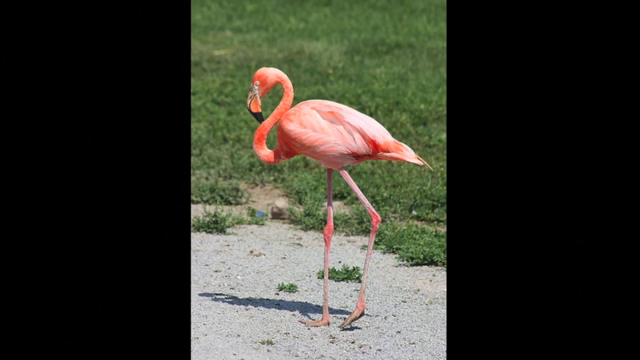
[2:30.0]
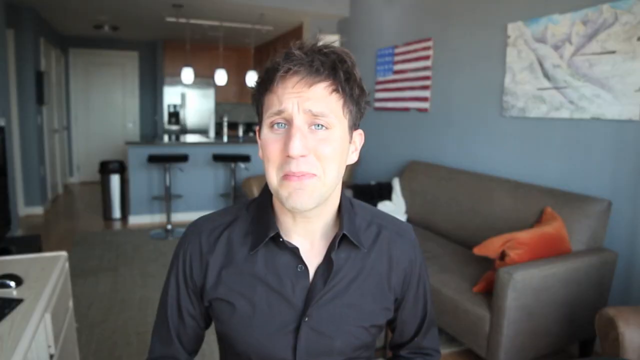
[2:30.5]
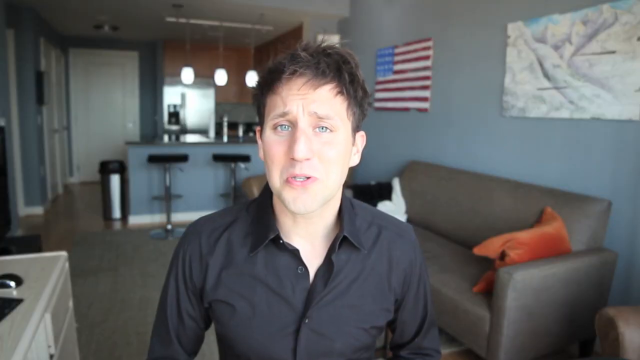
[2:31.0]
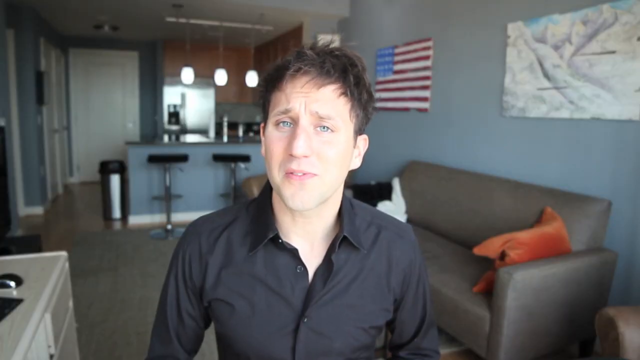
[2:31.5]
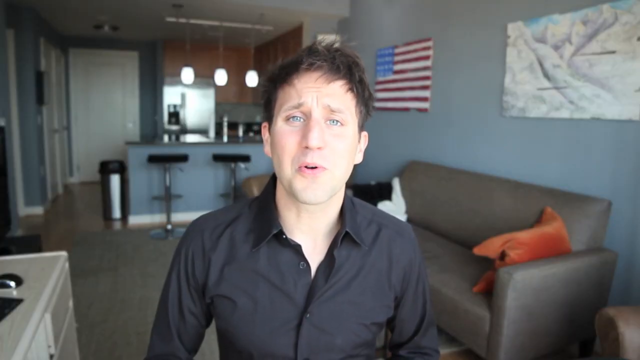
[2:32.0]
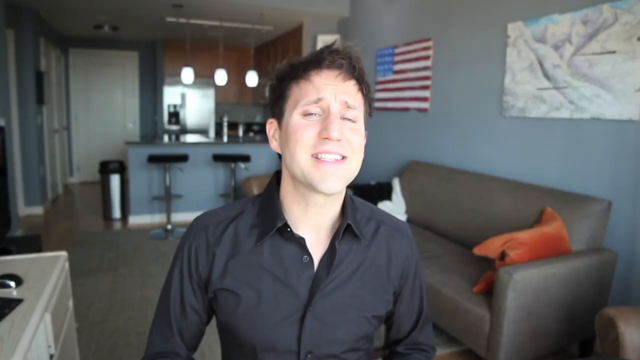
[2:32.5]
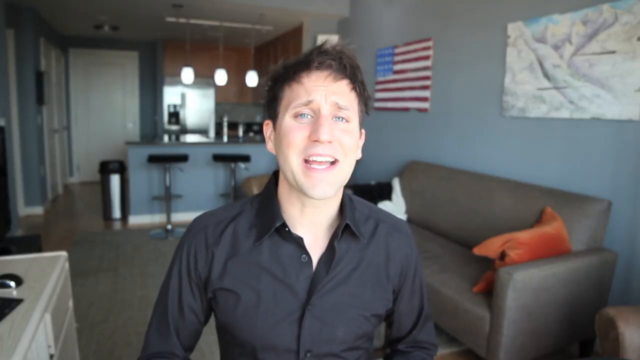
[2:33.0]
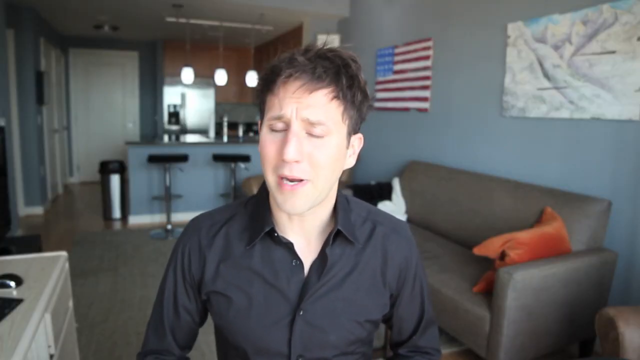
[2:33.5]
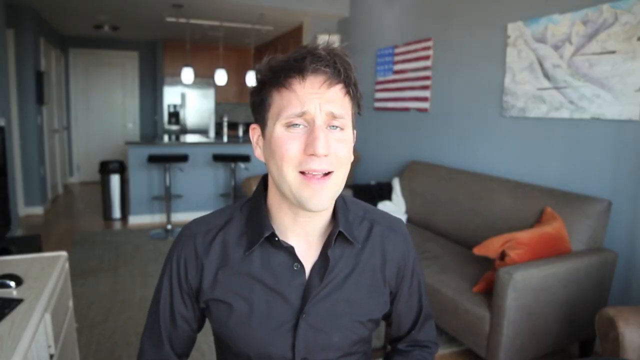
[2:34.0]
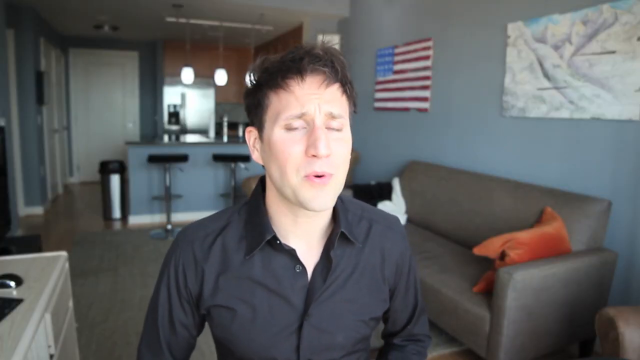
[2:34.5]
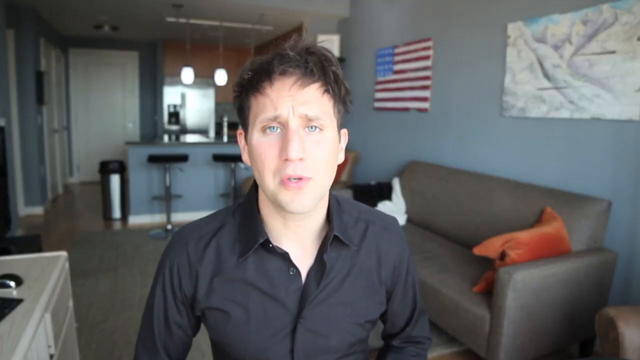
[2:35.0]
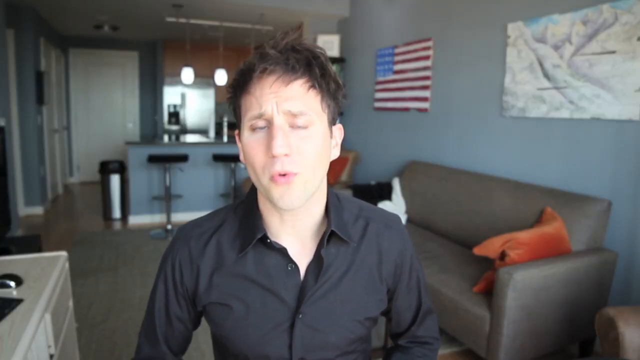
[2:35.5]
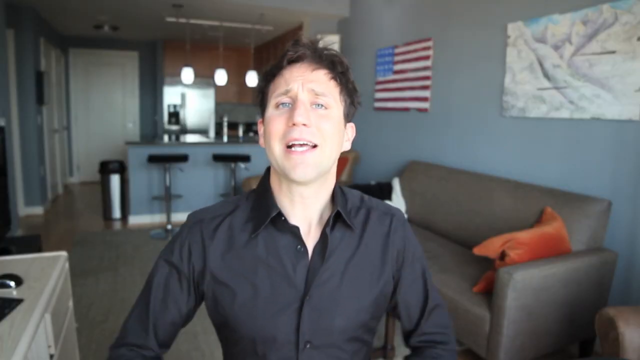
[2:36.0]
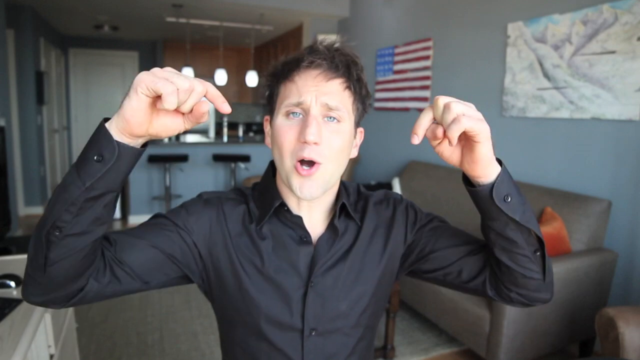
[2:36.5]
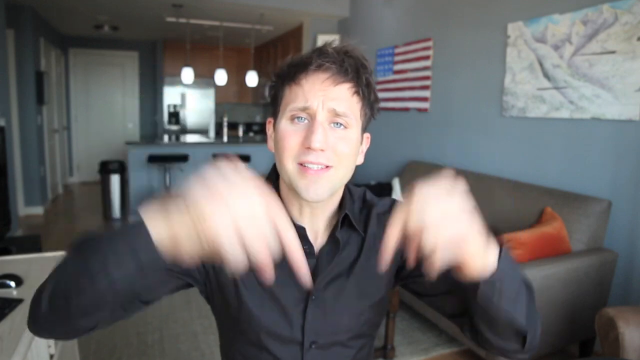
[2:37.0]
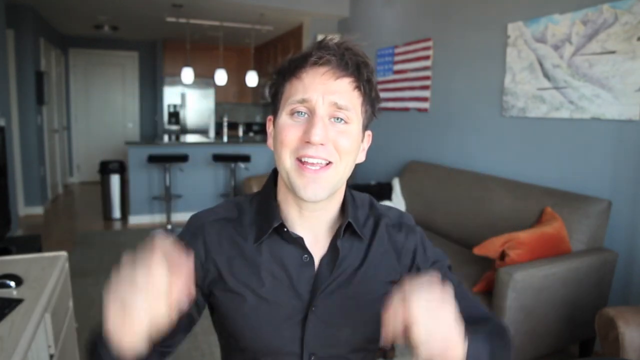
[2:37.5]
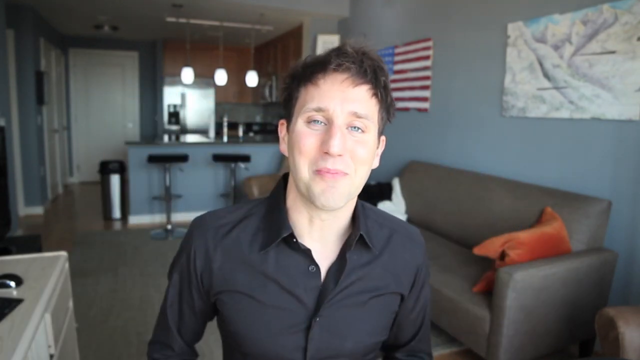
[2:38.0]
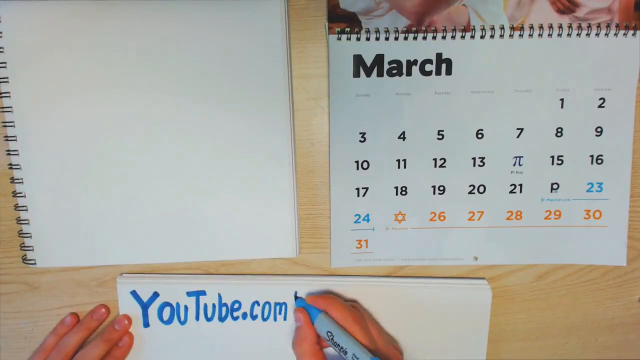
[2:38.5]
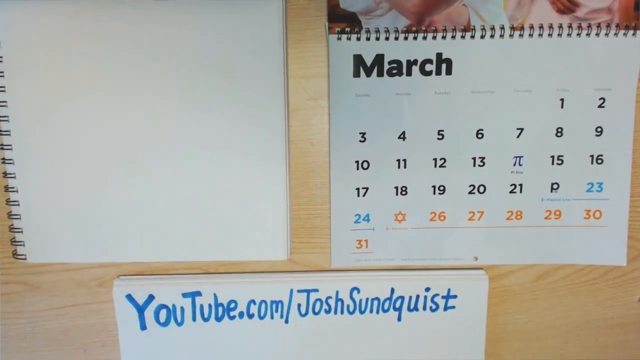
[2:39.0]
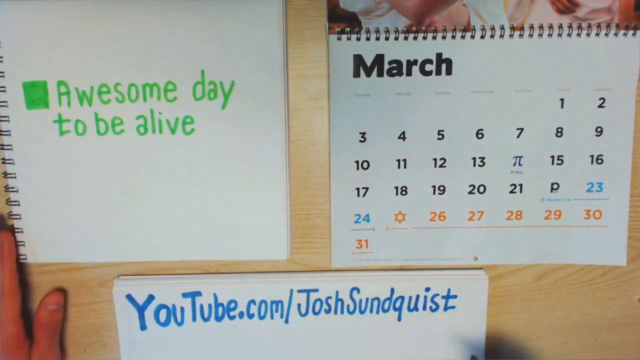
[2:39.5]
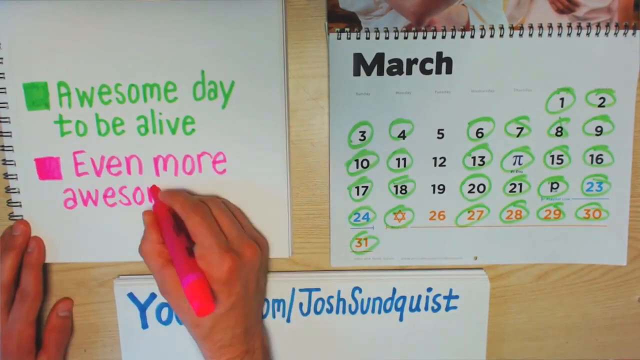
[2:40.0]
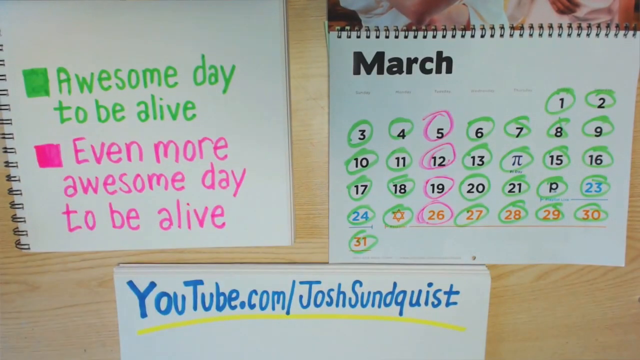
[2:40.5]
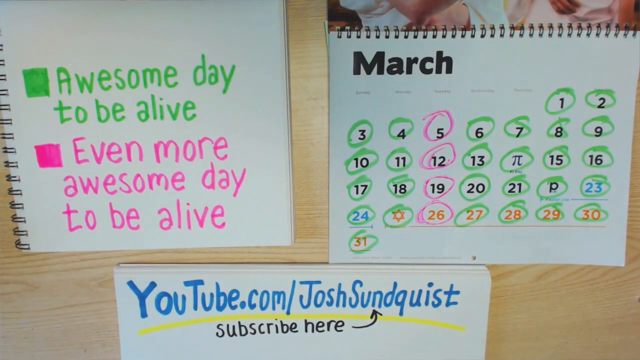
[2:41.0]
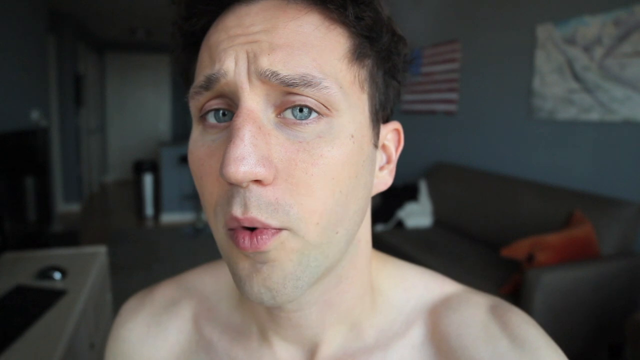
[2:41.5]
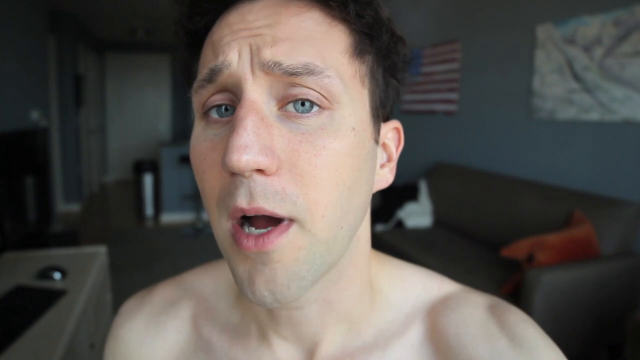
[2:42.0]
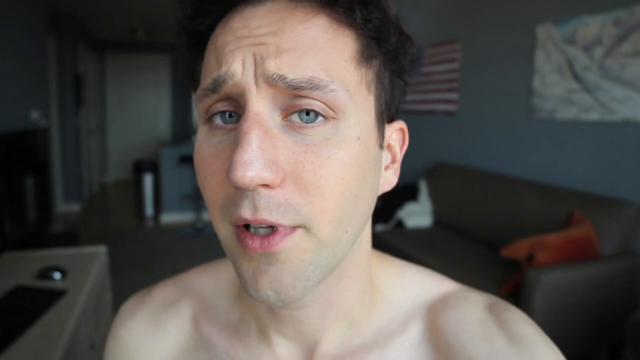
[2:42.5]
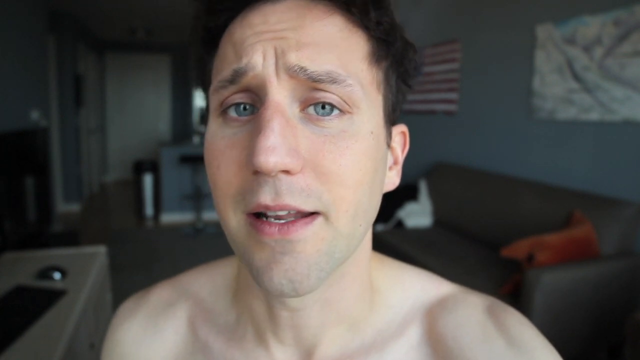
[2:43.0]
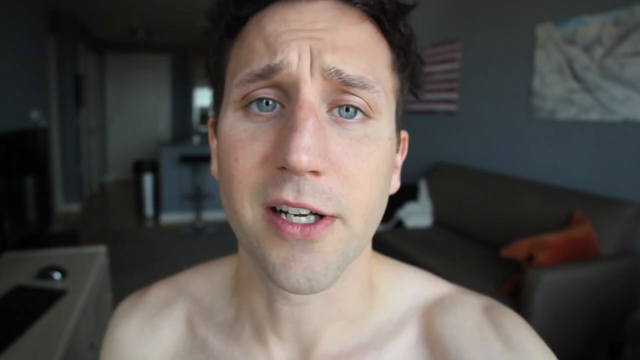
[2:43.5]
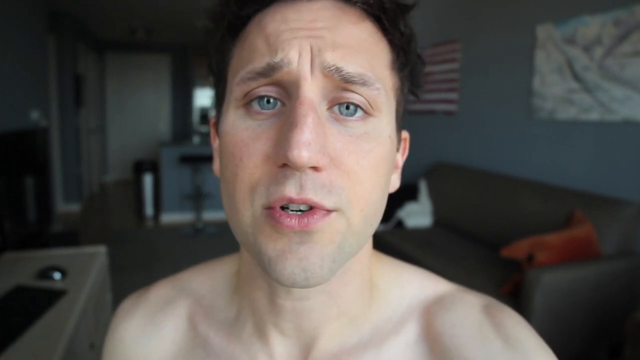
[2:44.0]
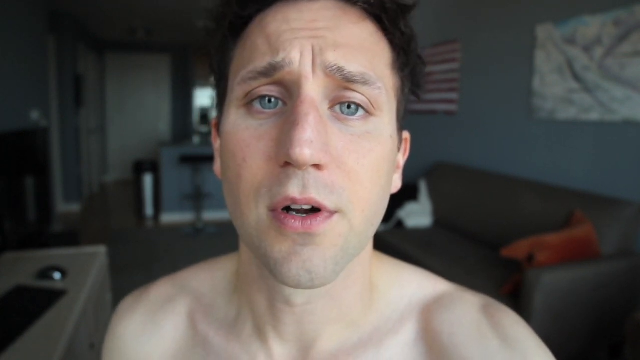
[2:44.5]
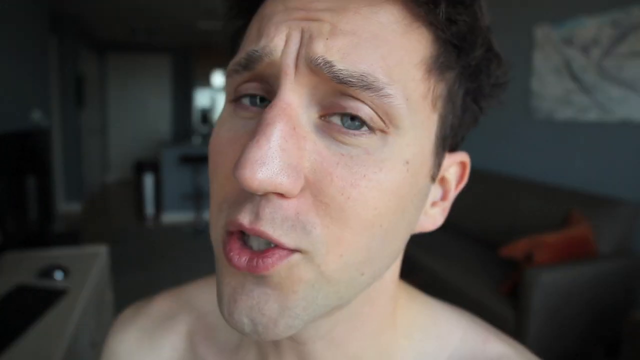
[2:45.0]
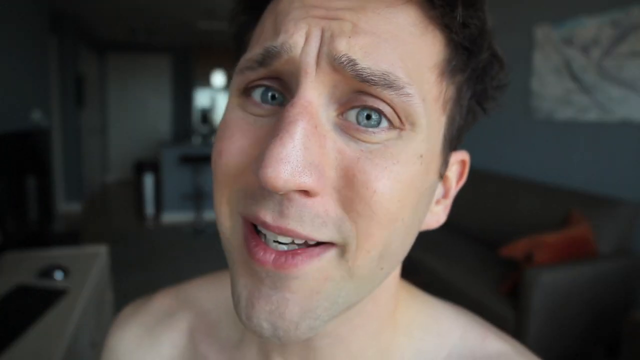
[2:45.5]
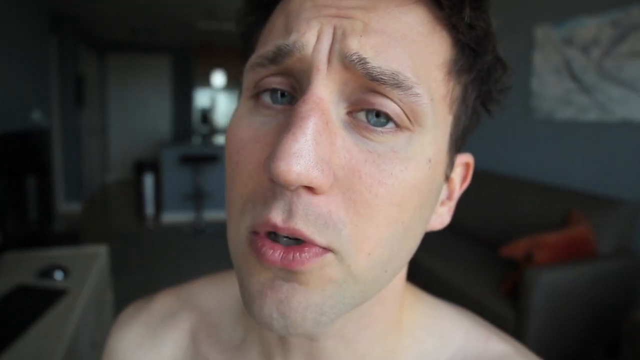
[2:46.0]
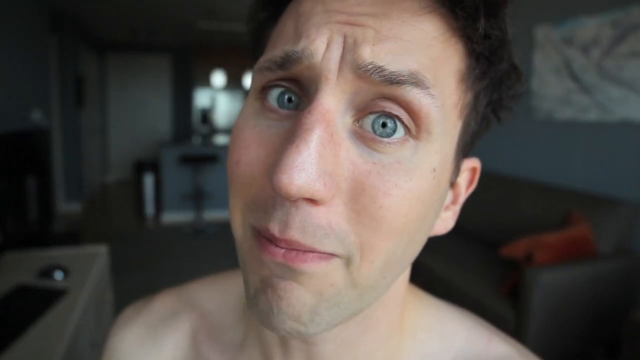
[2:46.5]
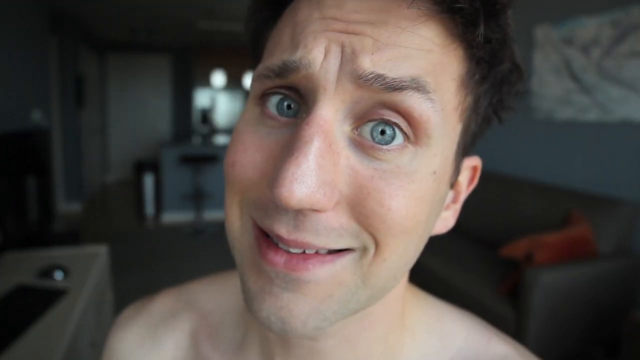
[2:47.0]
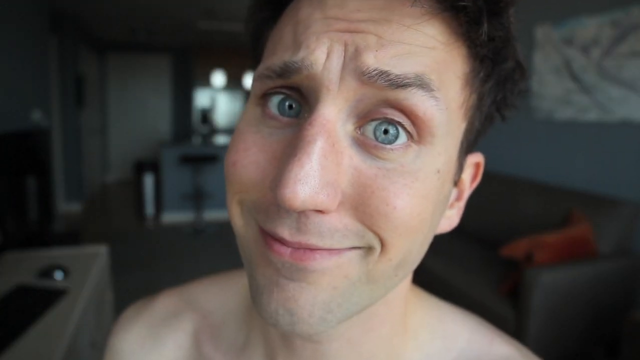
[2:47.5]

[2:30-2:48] A pink flamingo walks near a grassy field of short, apparently trimmed grass, though the flamingo itself is on a bare patch with no grass. The video cuts to a young man in his mid-20s in a black button-up shirt, speaking to the camera in an apartment; he gestures with his hands and points down. Next, a calendar is visible along with the young man's hands, which seem to be writing in a notebook. He writes "Awesome day to be alive." and underneath, in bright pink, "Even more awesome day to be alive." To the right are various states in green and pink. Below that a YouTube channel is listed: "youtube.com/Josh Sundquist", apparently directing viewers to his channel. The video then cuts back to the man without his shirt, his bare shoulders visible, still talking to the camera, with the apartment behind him looking darker.